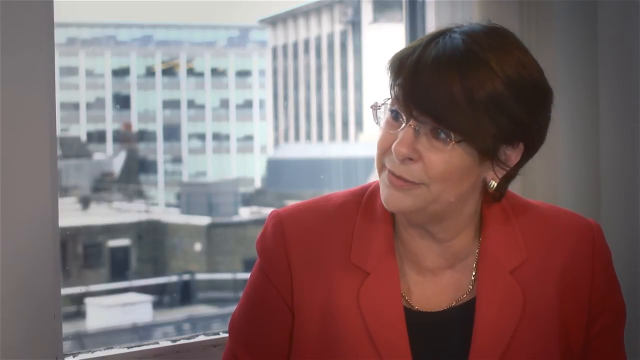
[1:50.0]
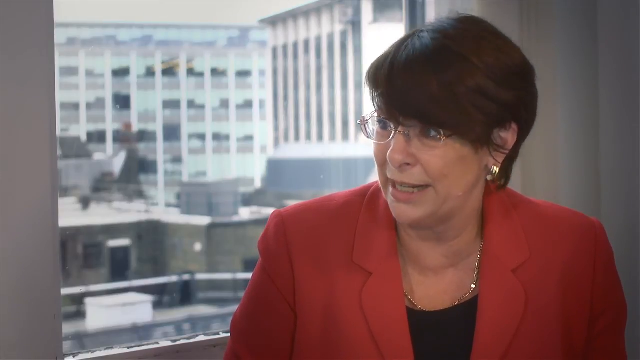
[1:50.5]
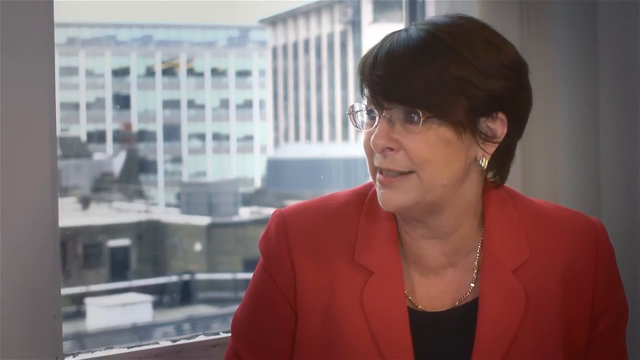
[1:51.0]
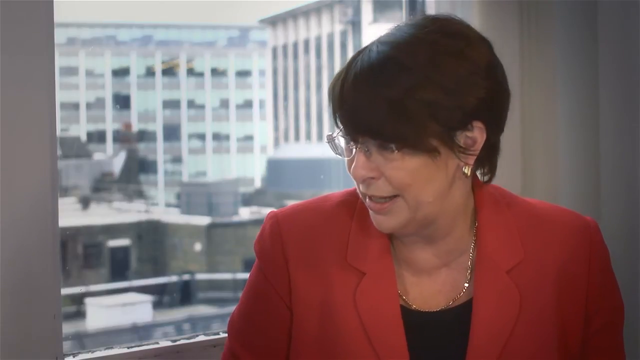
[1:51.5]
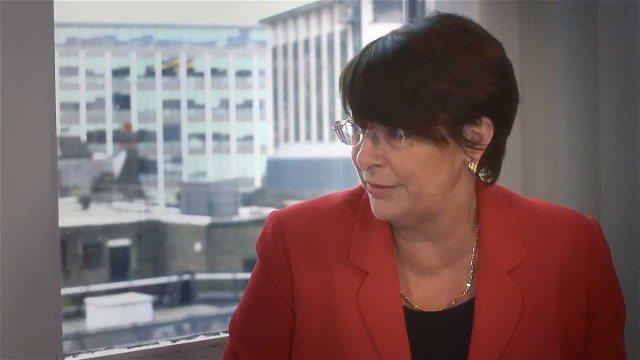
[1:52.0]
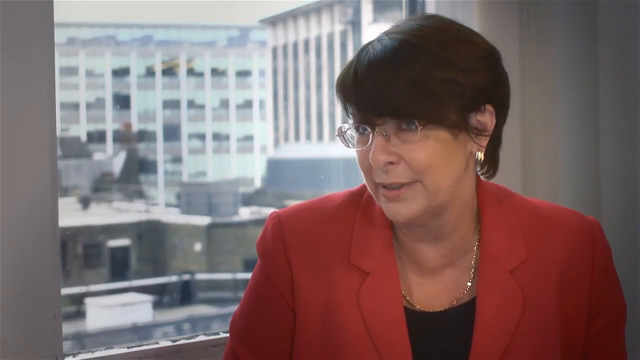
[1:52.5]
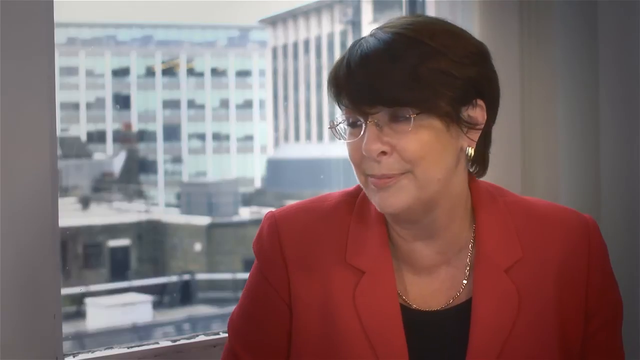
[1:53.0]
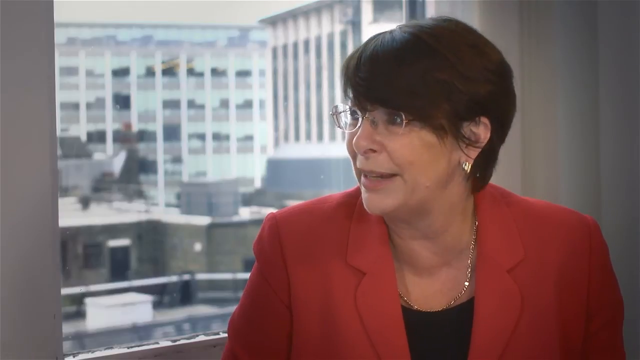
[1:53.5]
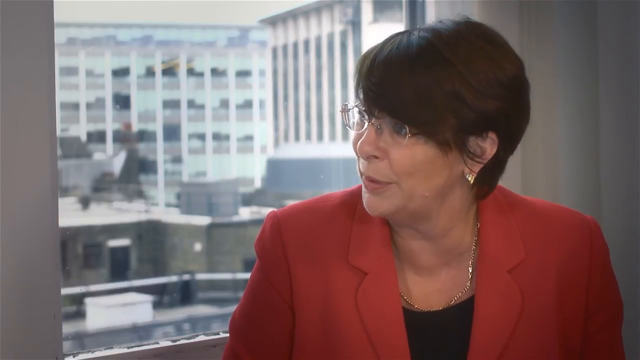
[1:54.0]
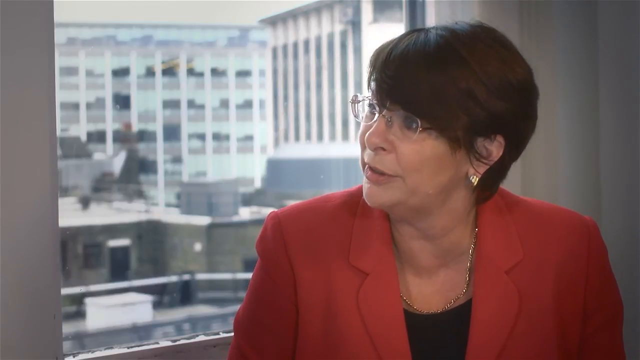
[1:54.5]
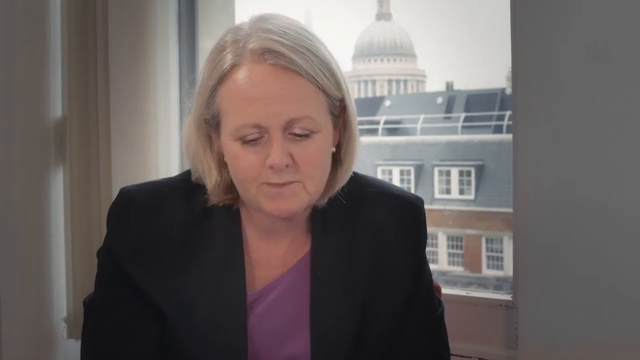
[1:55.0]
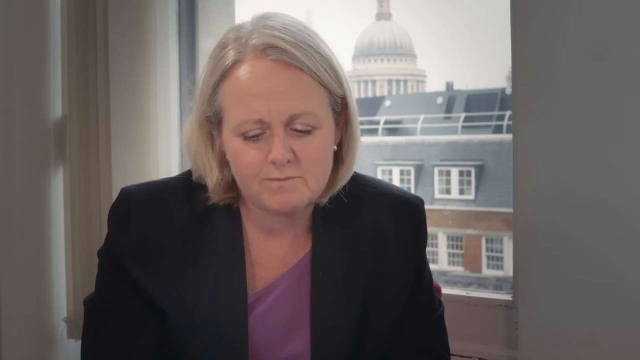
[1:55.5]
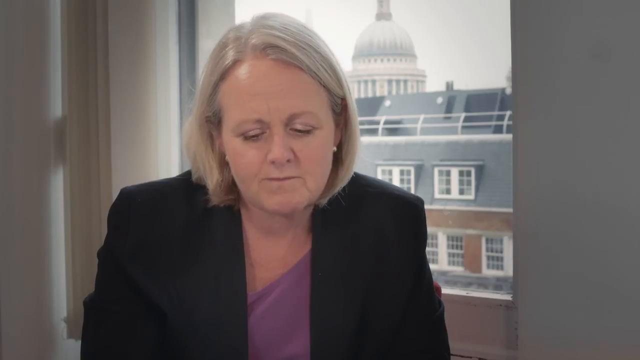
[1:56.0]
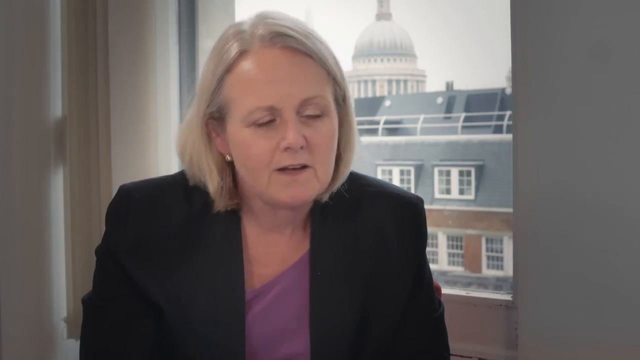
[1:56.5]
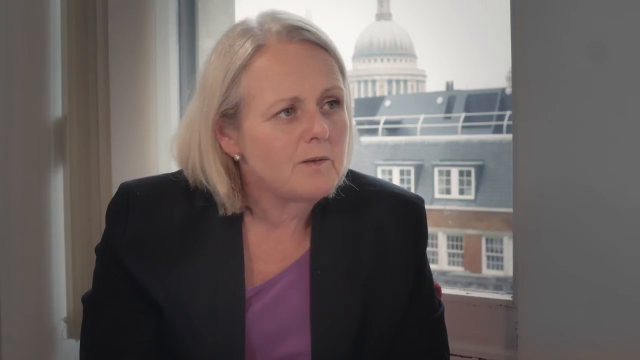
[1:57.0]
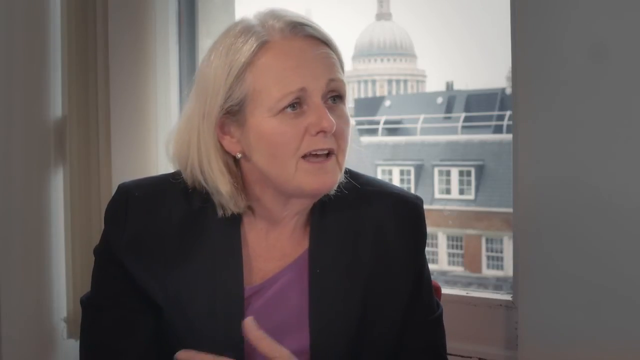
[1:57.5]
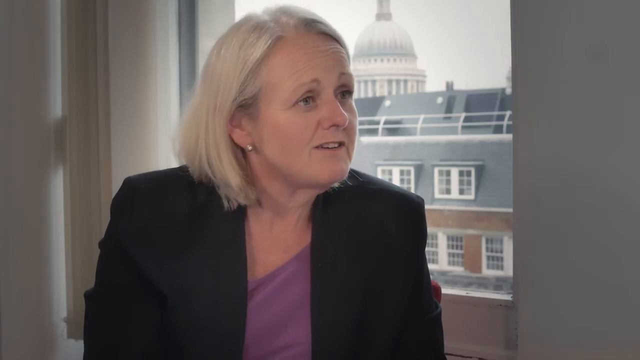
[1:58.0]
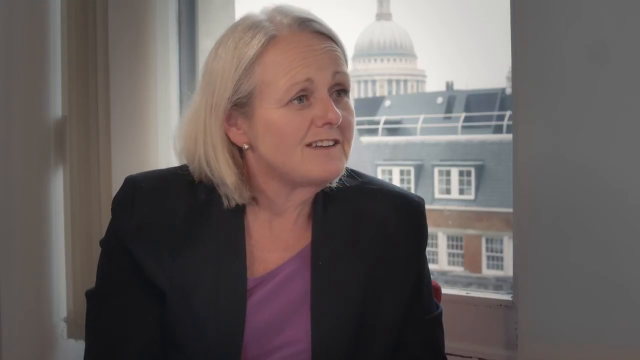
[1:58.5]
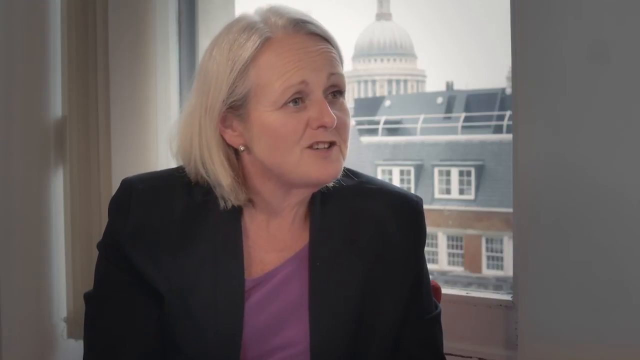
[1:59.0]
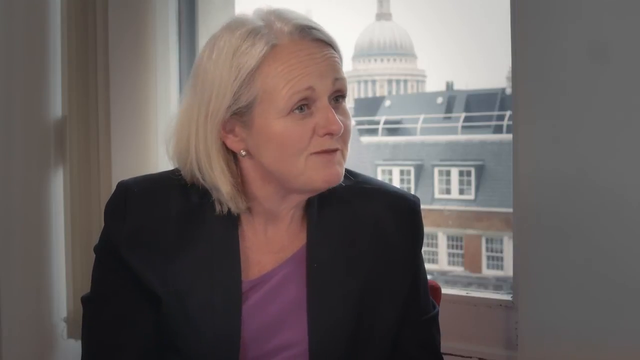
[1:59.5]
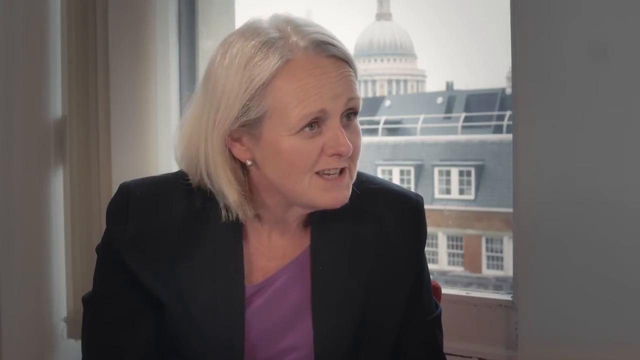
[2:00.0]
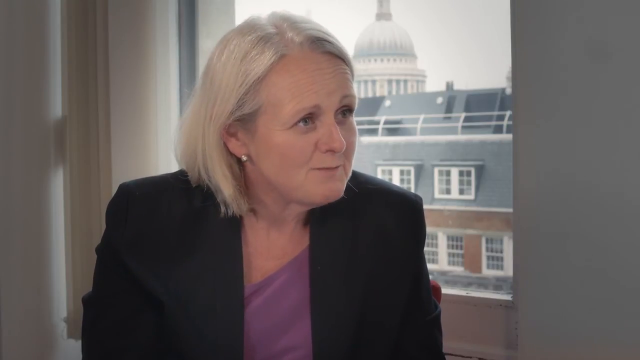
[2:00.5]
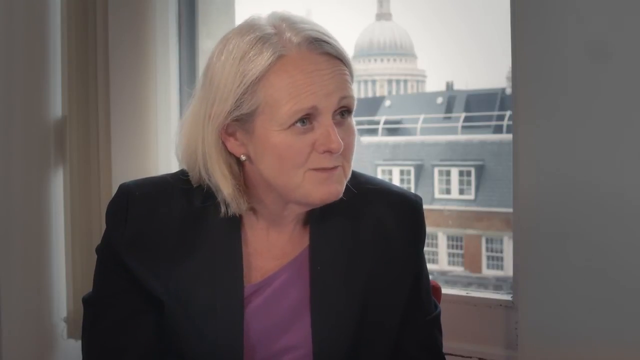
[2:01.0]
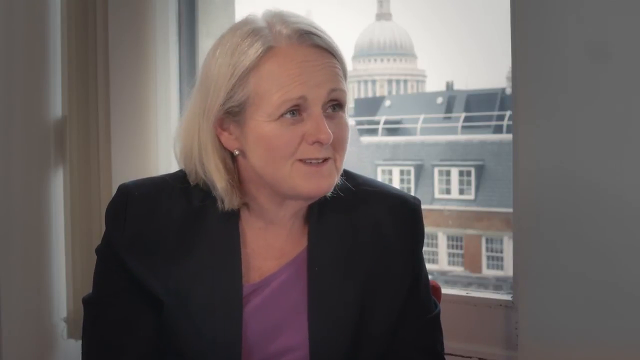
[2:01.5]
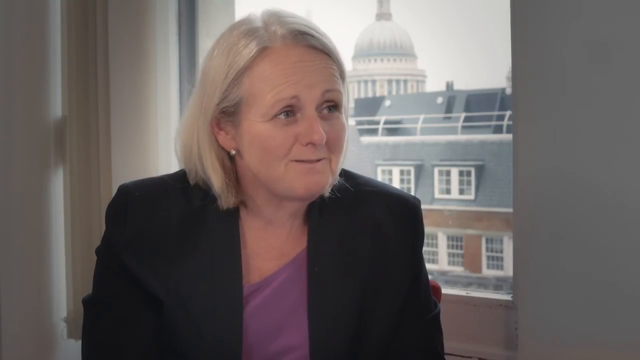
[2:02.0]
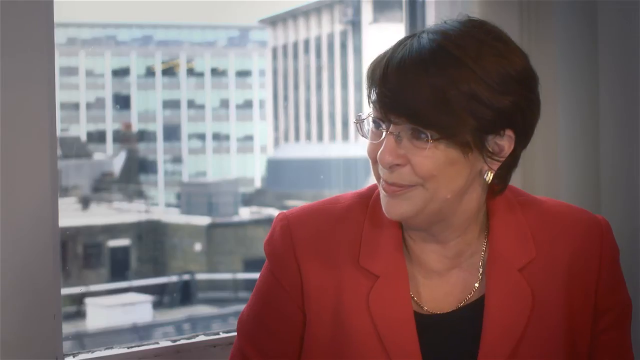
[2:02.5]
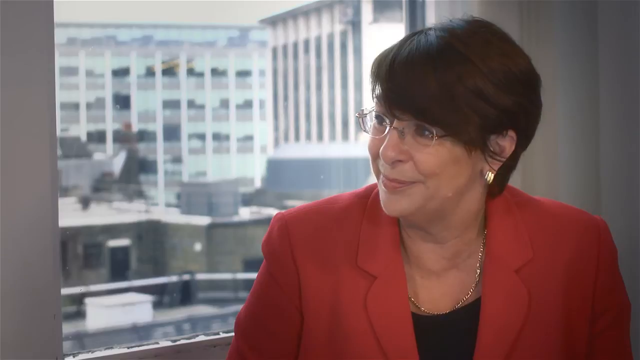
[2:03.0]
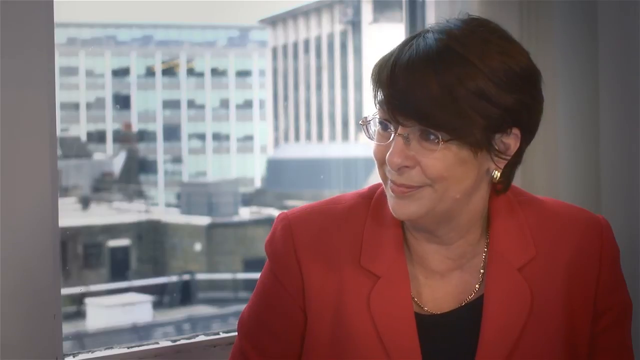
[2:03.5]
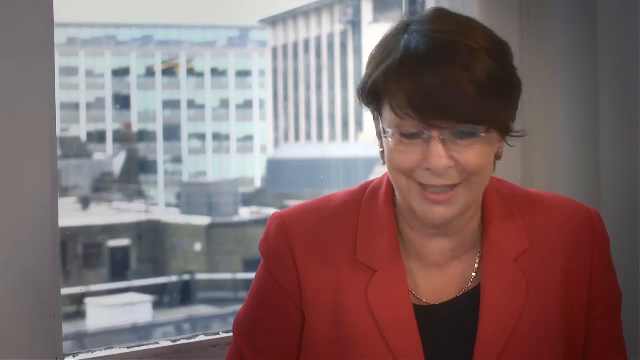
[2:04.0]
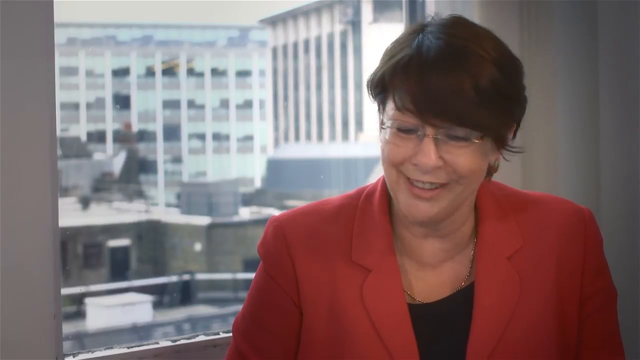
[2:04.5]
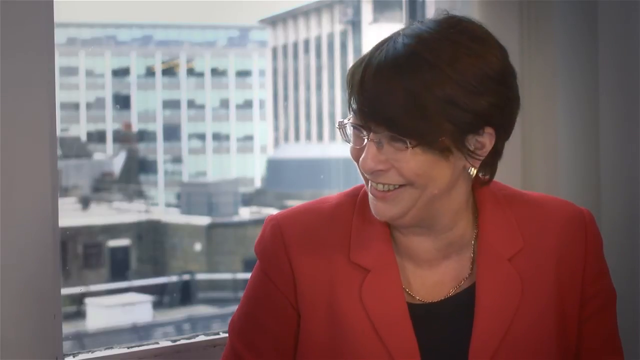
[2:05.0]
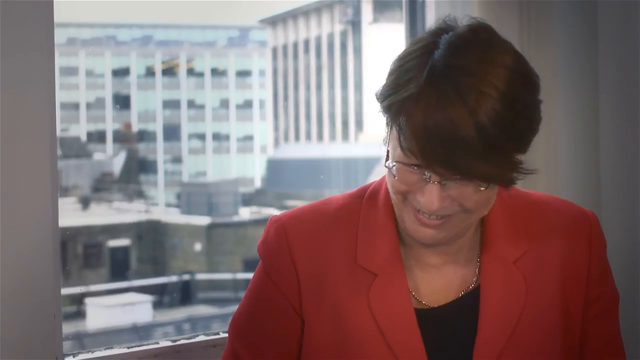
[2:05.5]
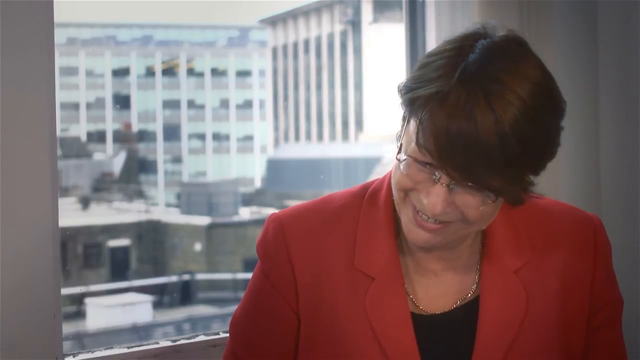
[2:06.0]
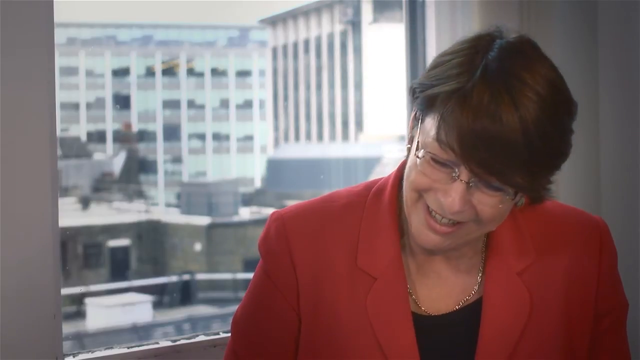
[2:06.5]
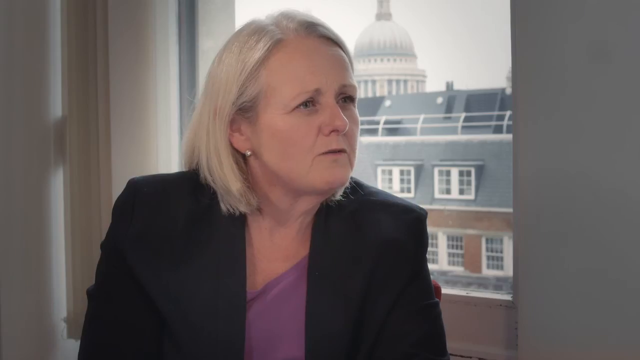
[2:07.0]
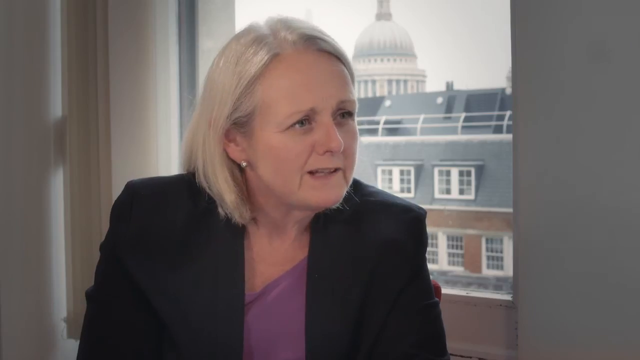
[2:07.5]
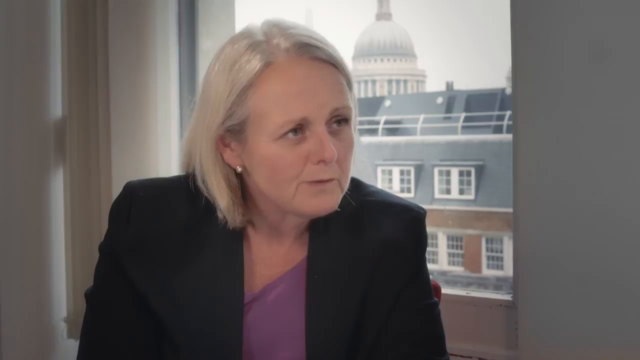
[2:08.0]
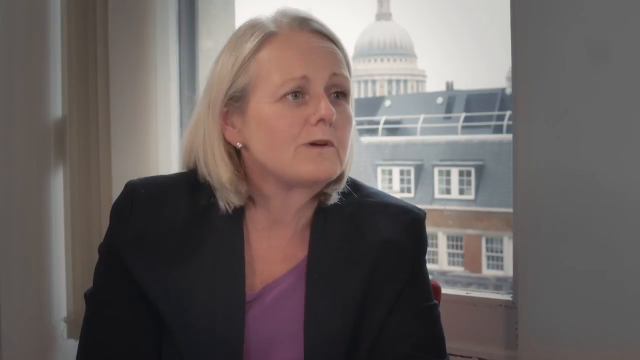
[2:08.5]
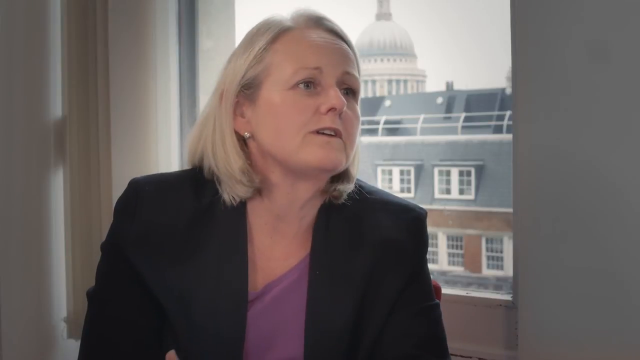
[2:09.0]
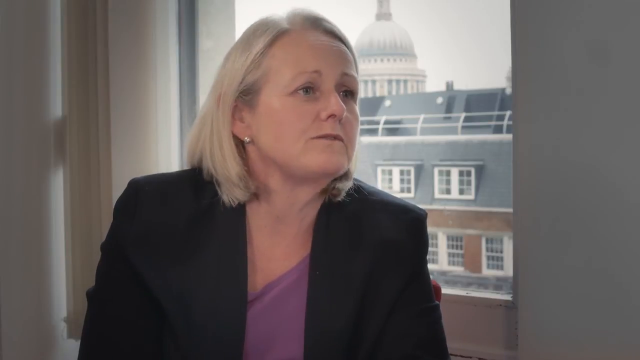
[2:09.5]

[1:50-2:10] The woman with the red blazer, black shirt and brown hair appears, wearing glasses, earrings and a golden necklace. She speaks to the woman to her right in a kind of one-on-one interview style, with cameras on both of them. It then pans back to the woman in the black blazer, purple shirt and blonde hair. They have a conversation back and forth, and the camera alternates between the two whenever one is speaking: back to the brown-haired woman in the red blazer, back to the blonde-haired woman in the black blazer, and back to the brown-haired woman in the red blazer.